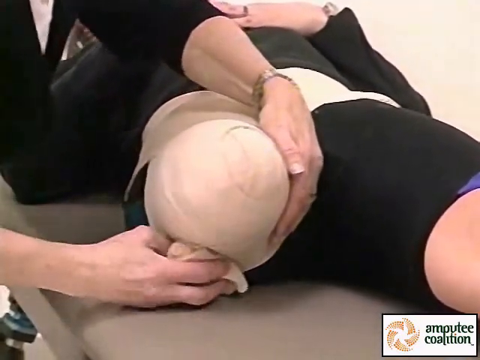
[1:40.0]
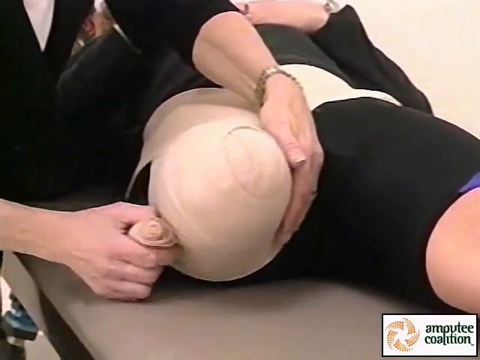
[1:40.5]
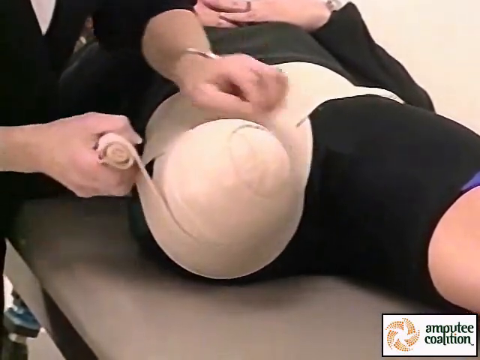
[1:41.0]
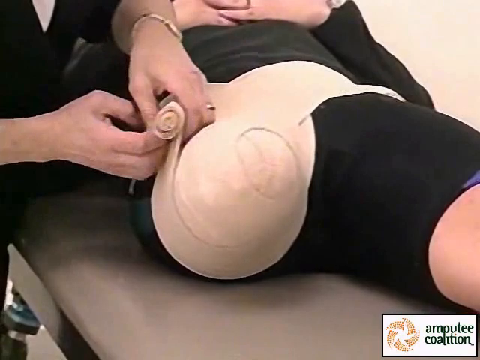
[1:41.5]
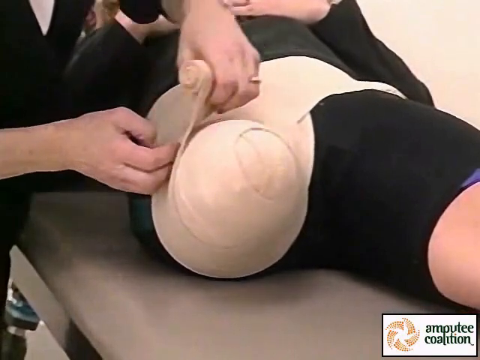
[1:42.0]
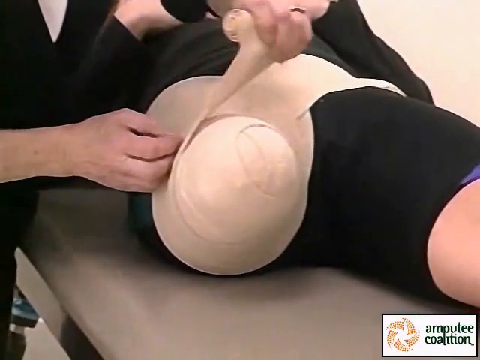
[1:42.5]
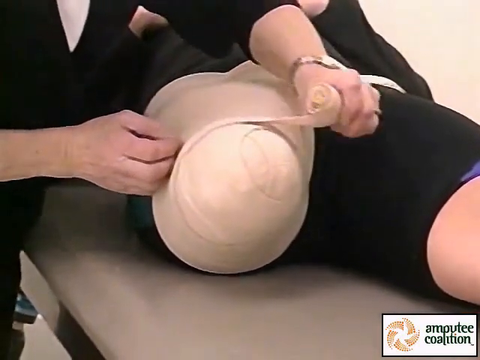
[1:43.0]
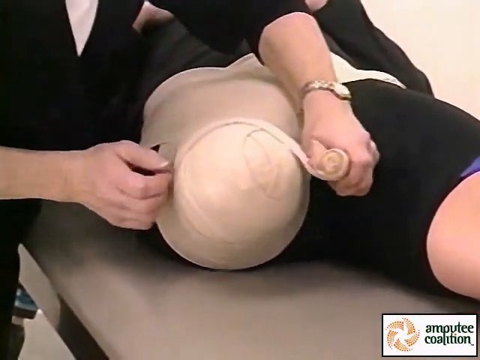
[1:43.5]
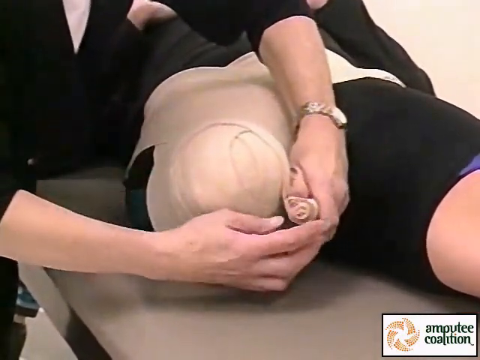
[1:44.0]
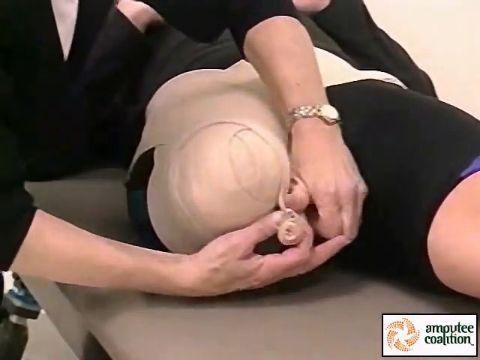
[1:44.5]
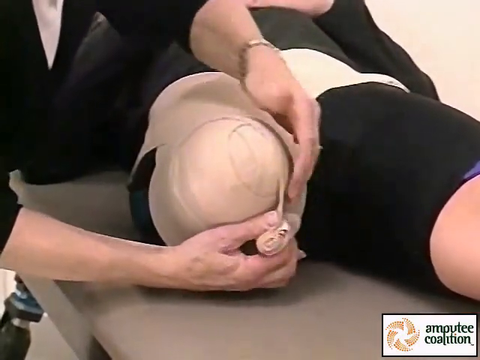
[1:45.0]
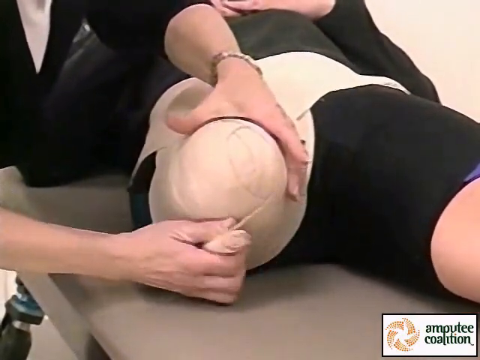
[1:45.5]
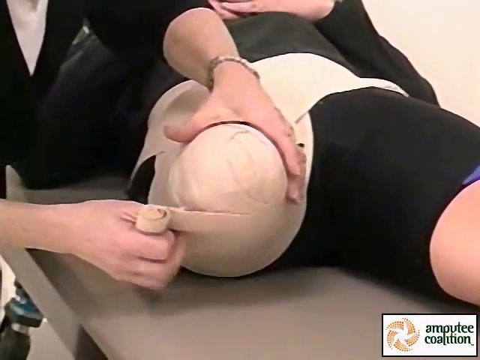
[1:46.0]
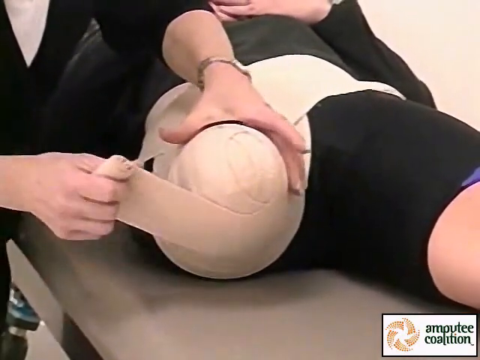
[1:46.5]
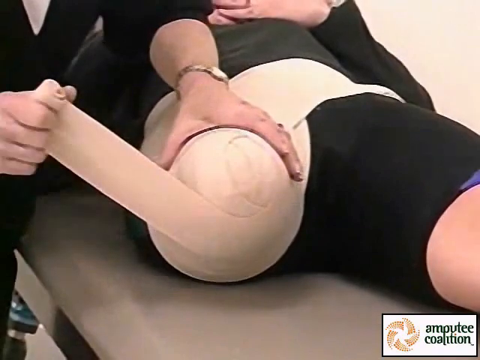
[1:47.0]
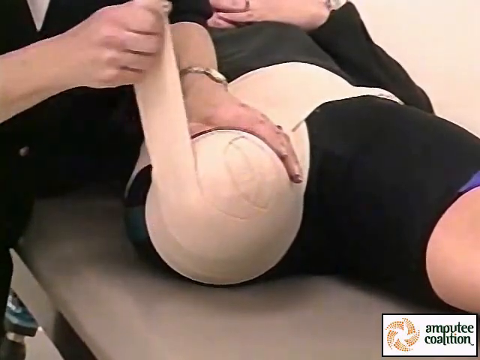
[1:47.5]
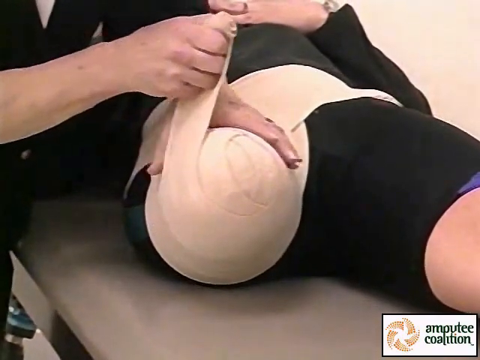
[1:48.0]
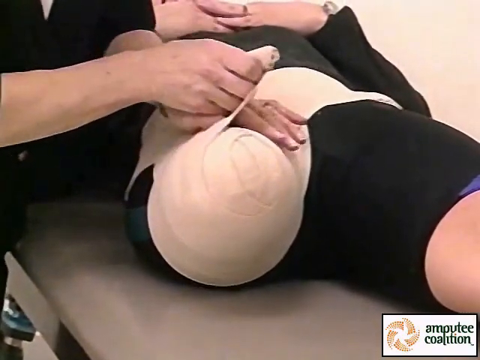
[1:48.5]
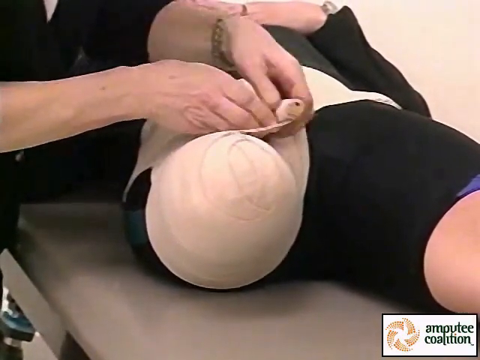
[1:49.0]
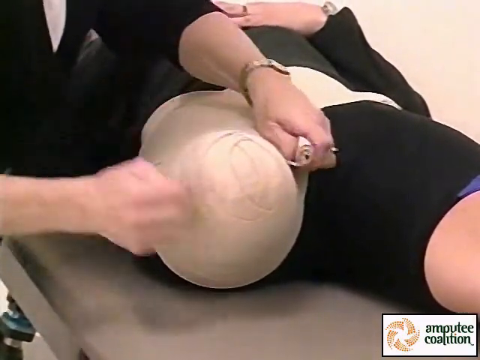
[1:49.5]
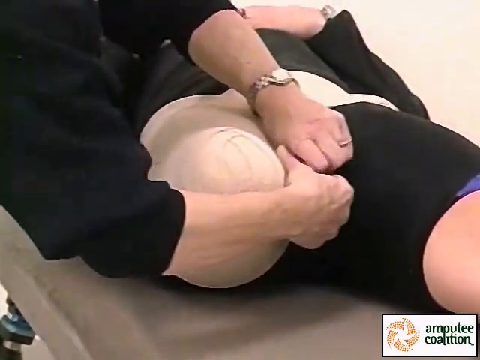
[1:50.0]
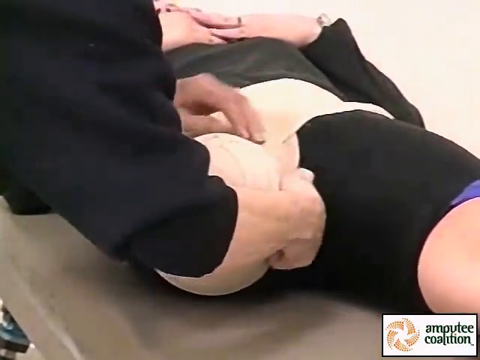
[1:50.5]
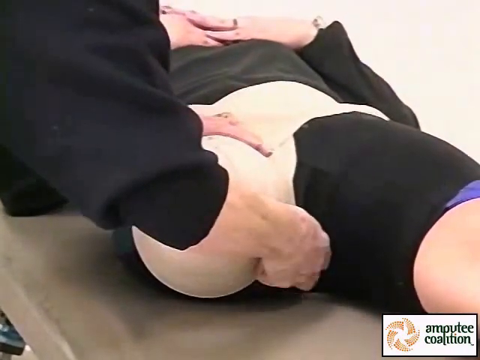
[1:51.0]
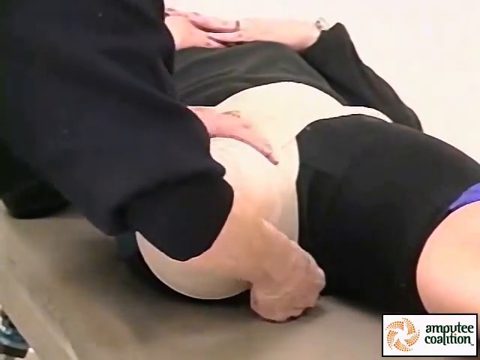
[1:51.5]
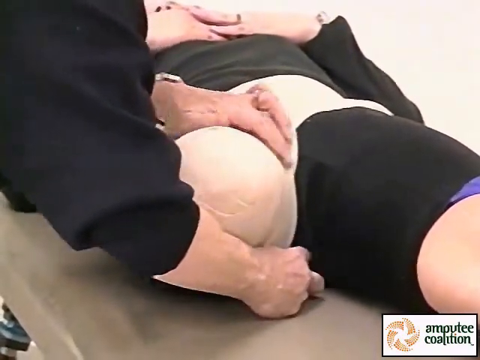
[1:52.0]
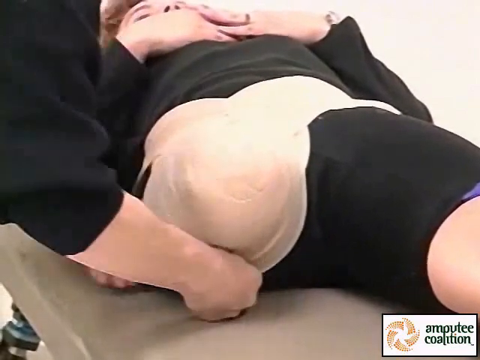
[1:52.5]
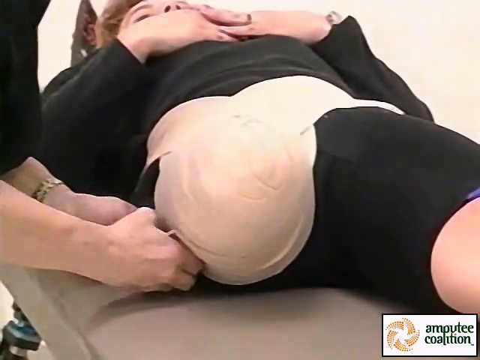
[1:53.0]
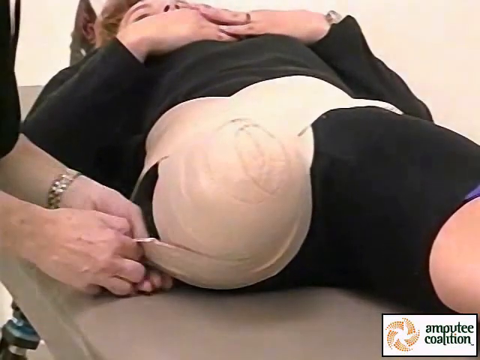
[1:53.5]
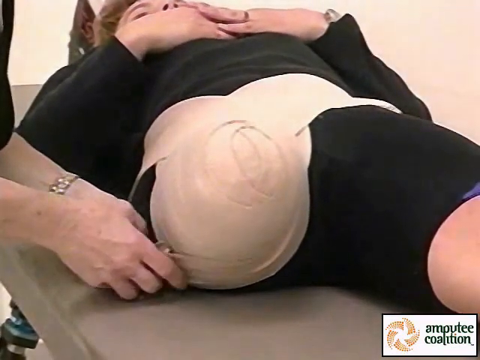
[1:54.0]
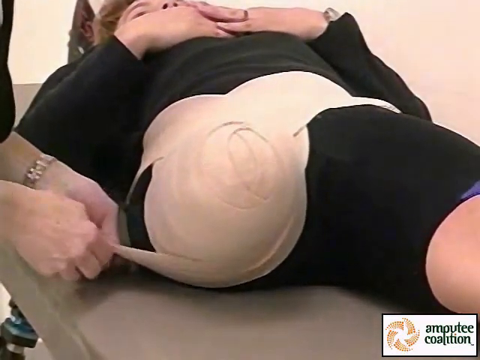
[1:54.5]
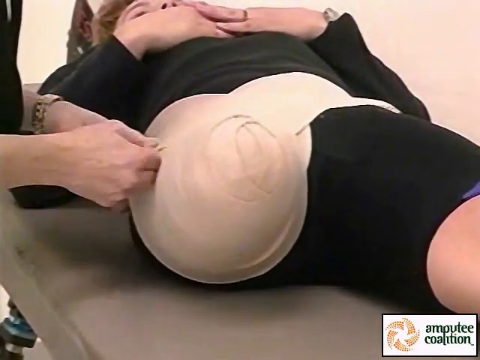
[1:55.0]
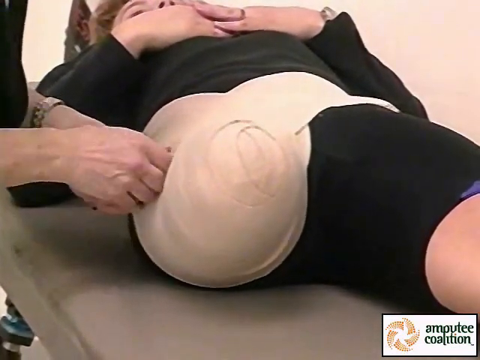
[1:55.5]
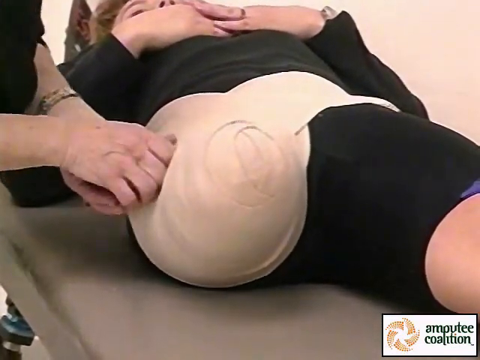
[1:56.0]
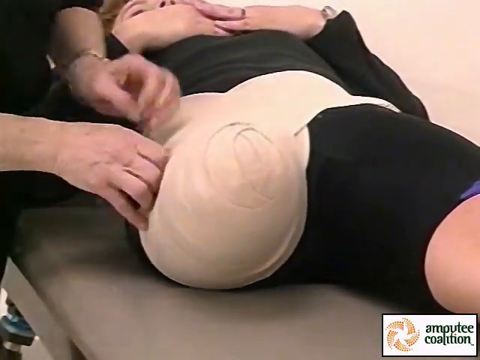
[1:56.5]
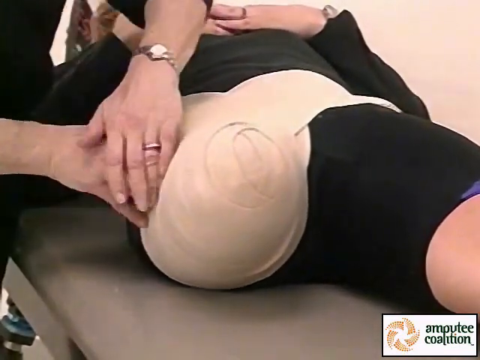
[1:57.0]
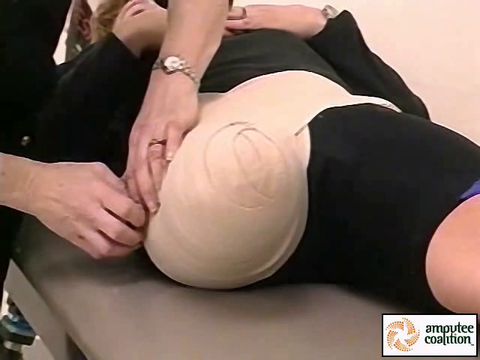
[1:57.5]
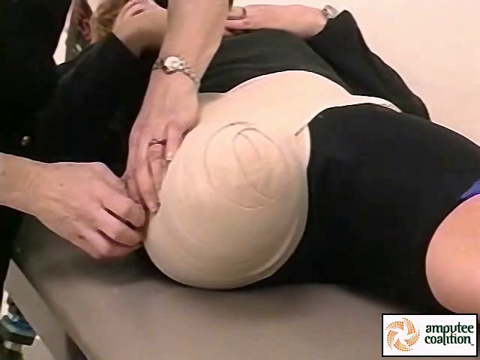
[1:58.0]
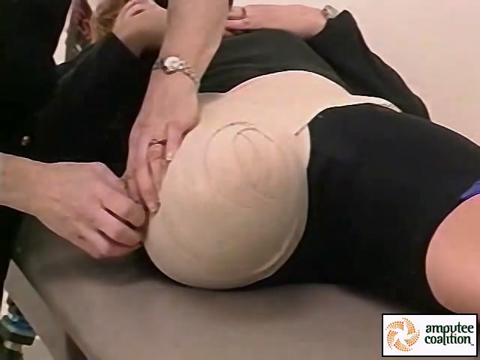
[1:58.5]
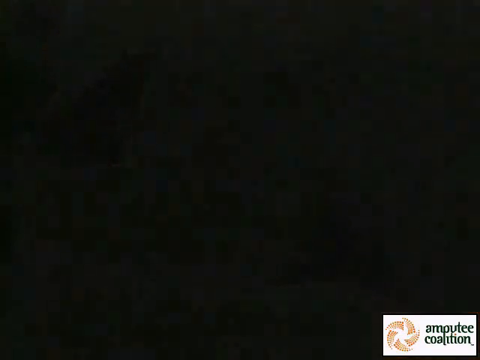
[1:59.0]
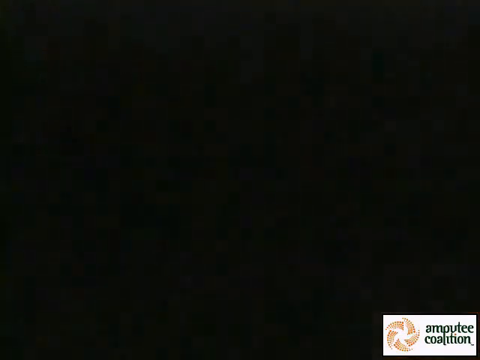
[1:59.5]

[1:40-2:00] A person lies on her back on a light tan mat; her head is not visible, but the top part of her body is. She wears a long-sleeved black shirt and tight black spandex shorts with purple trim. She is missing her right leg, leaving only a stump. A person standing on the left side of the bed wears black pants and a white shirt under a long-sleeved black shirt rolled up to her elbows, along with a gold watch on her left arm. She holds a light tan elastic bandage and wraps it all the way around and in front of the stub until the stub is completely covered.